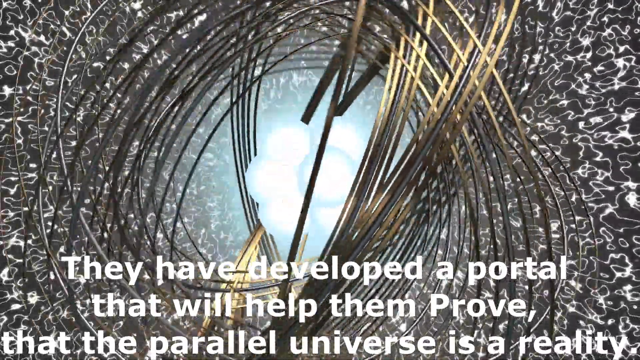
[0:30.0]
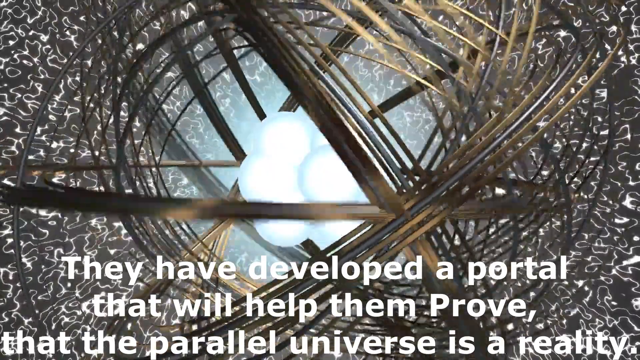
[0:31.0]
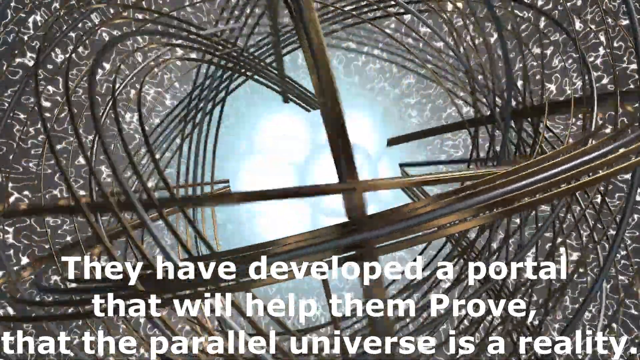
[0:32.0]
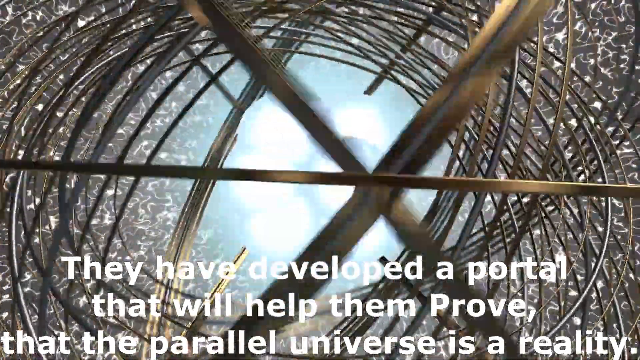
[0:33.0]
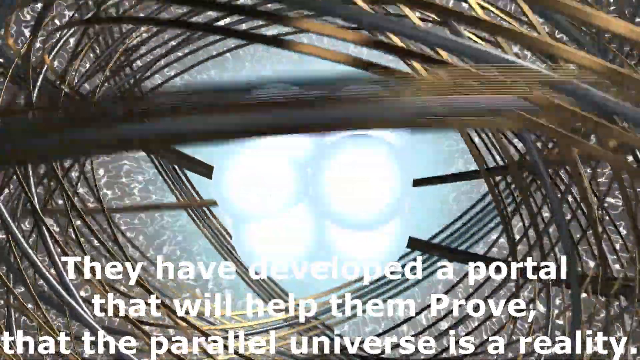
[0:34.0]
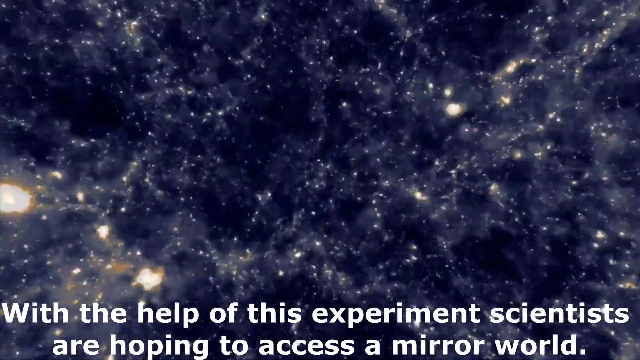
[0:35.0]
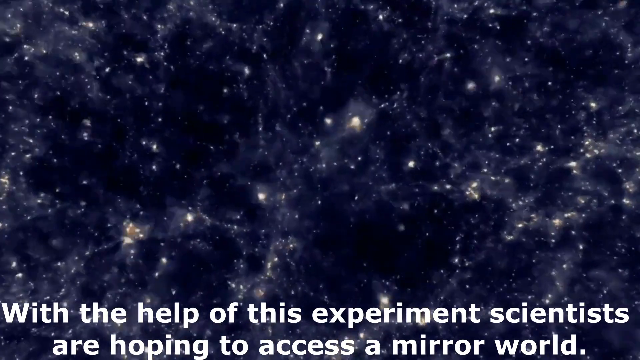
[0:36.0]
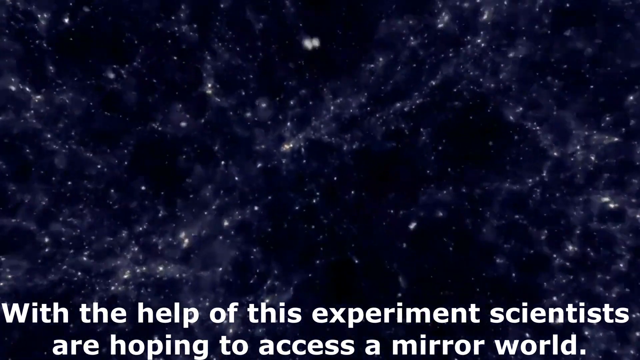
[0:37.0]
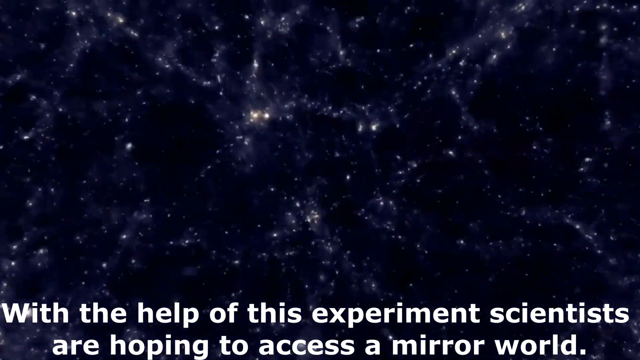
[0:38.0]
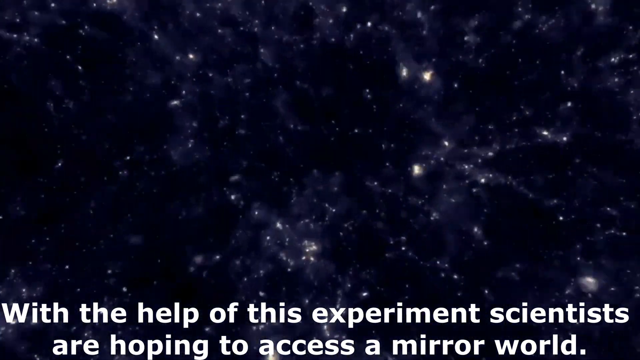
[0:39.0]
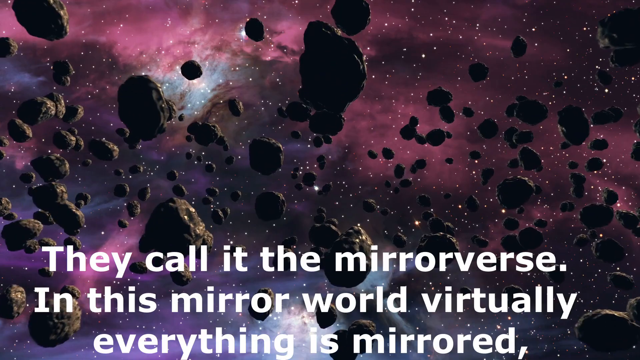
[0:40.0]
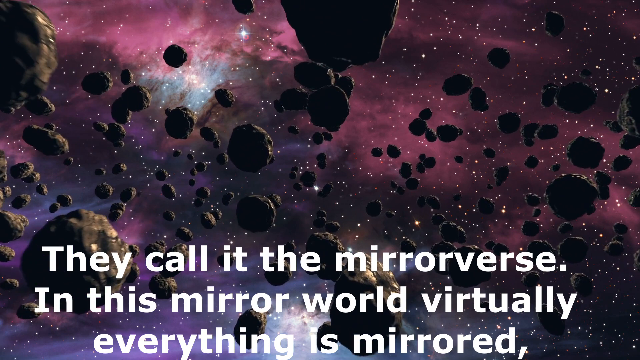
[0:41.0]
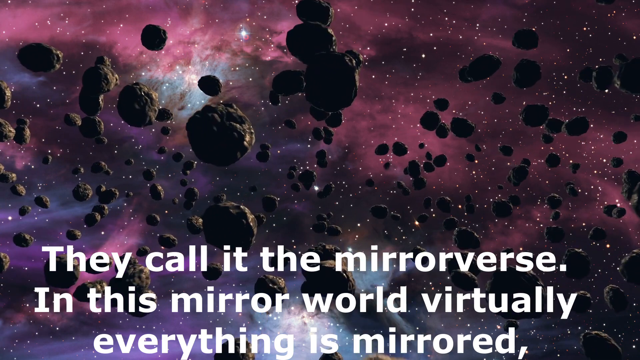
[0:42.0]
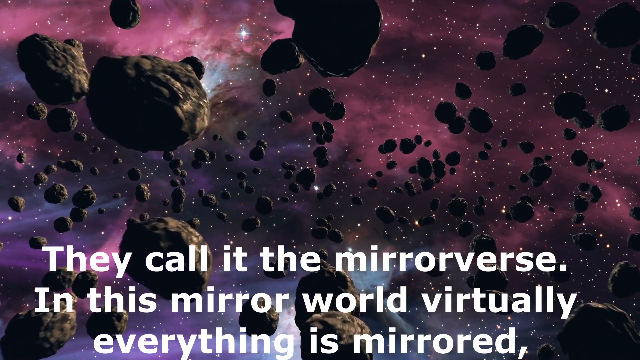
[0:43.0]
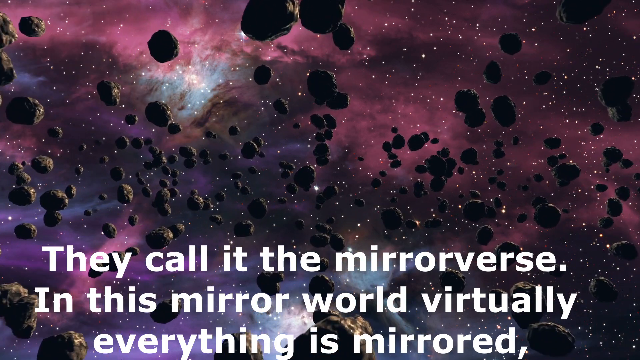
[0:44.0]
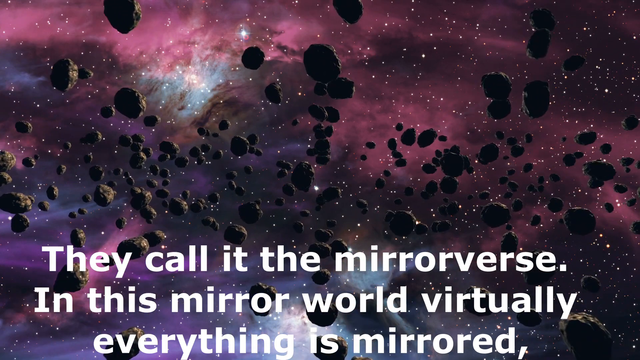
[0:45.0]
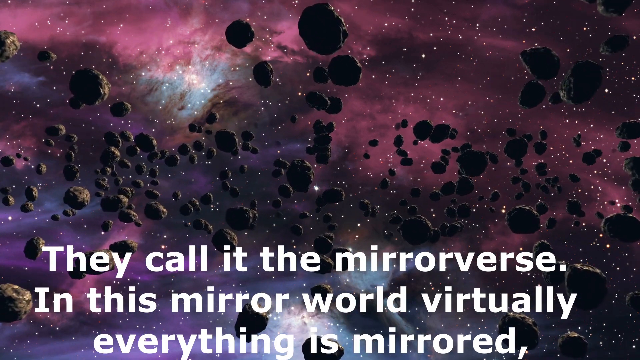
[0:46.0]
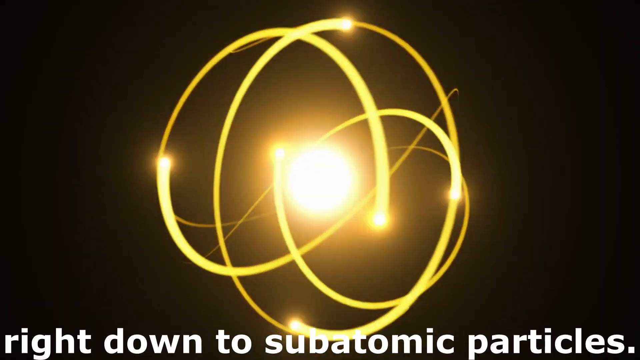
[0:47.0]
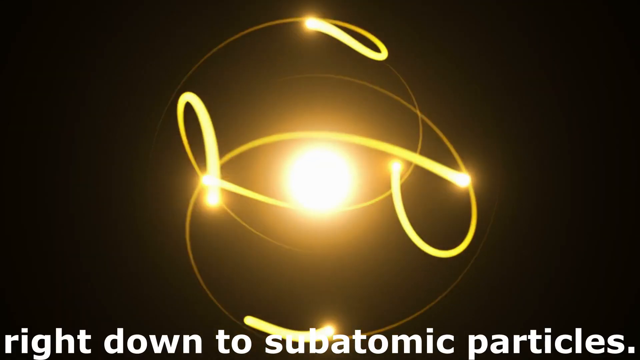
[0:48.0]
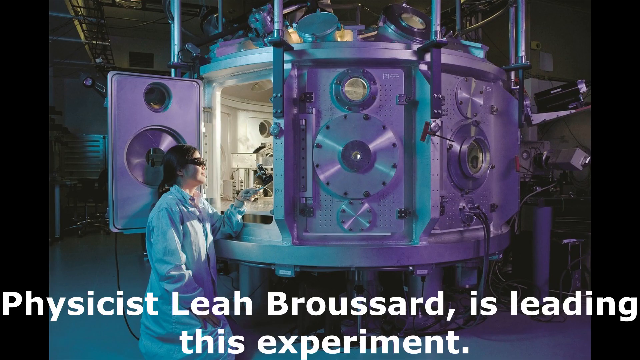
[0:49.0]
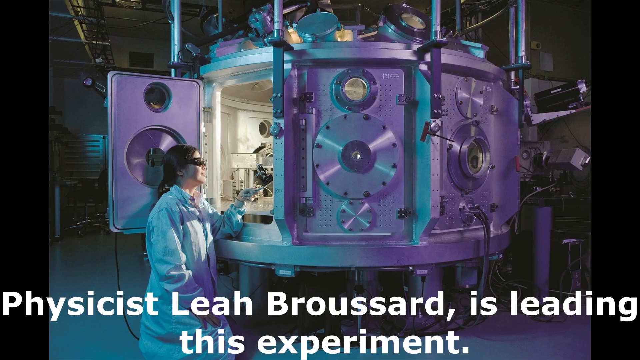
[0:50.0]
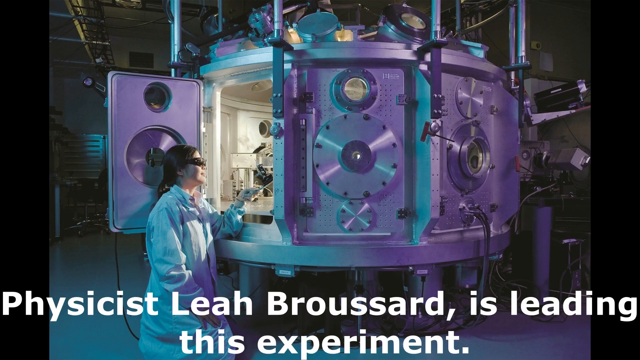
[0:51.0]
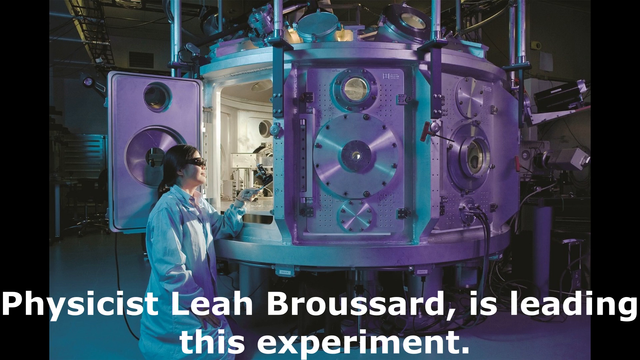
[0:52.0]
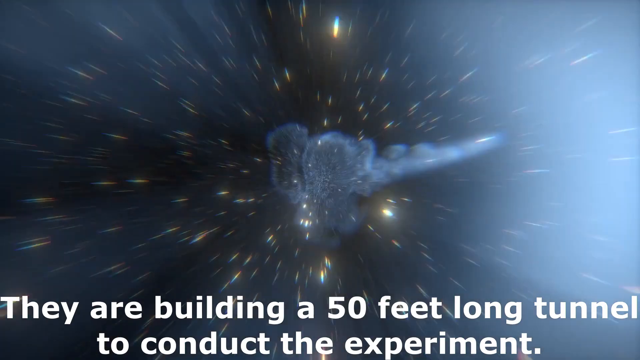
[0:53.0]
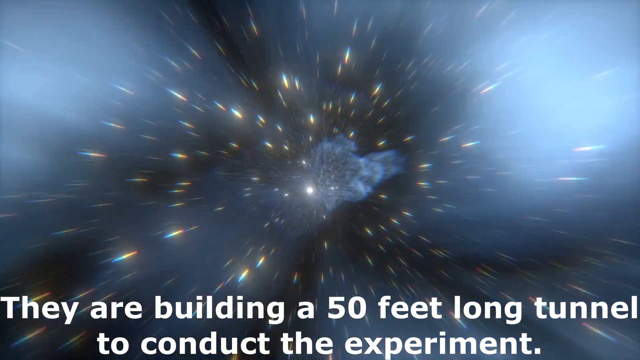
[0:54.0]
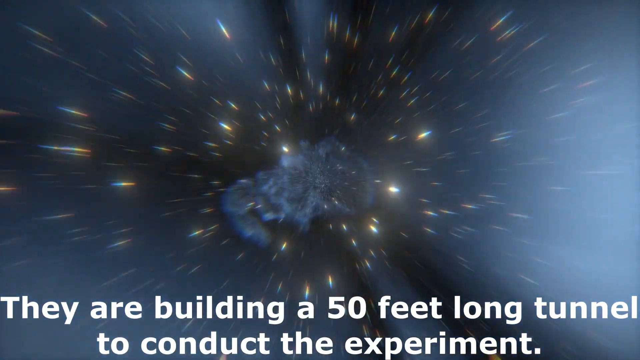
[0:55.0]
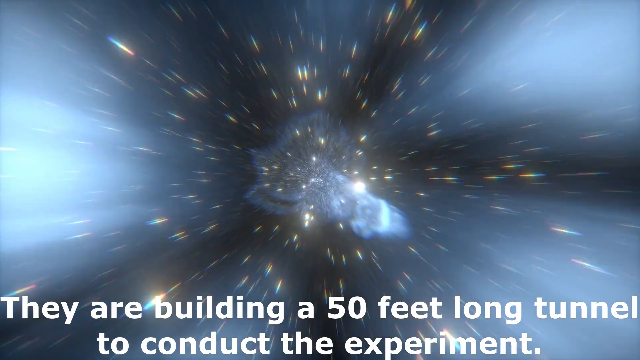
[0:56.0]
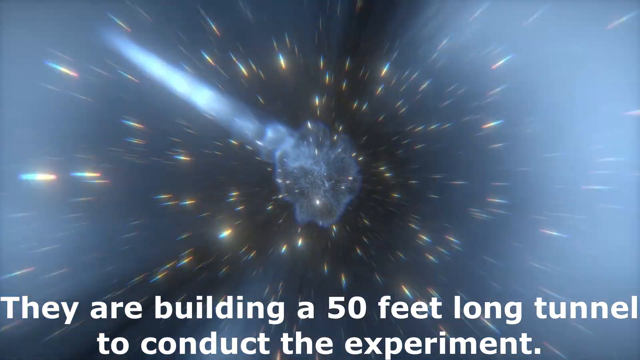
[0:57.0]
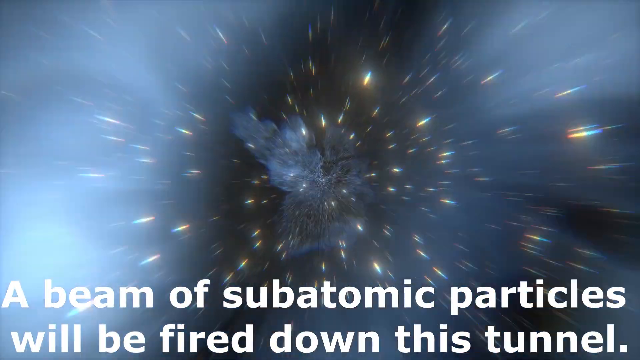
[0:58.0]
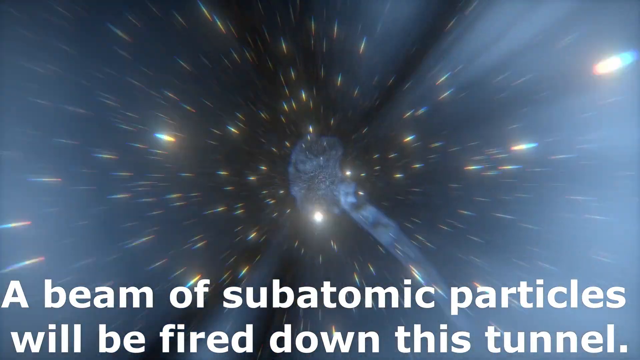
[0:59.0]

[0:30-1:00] The very bright molecule or atom keeps spinning, with a whole bunch of circular, metallic-like rings spinning around it and its middle very bright. Captions at the bottom read: "They have developed a portal that will help them prove that the parallel universe is a reality." The scene changes, and it looks like the view is floating forward through space, passing white stars against a very dark background. Captions at the bottom read: "With the help of this experiment, scientists are hoping to access a mirror world." A different scene of outer space follows, with asteroids floating toward the viewer, as if in an asteroid belt. The captions read: "They call it the Mirror verse. In this mirror world, virtually everything is mirrored." A large field of asteroids keeps coming toward the viewer, with outer space in the background in a mixture of purple, dark purple and light purple. Then a whole bunch of spinning yellow, golden lines form and move in a circular motion, kind of looking like a molecule.